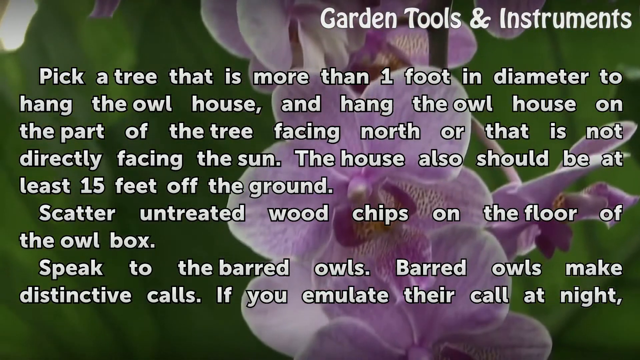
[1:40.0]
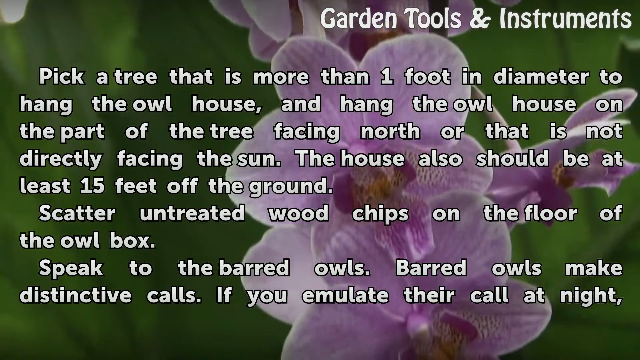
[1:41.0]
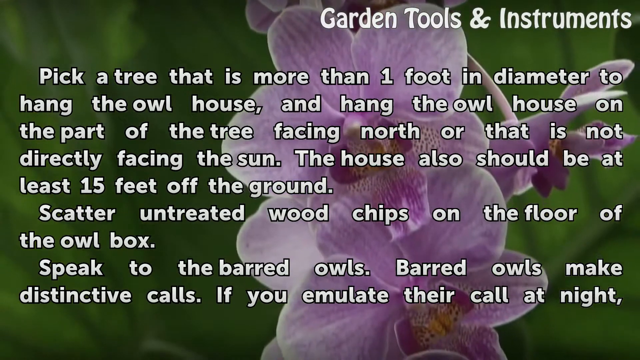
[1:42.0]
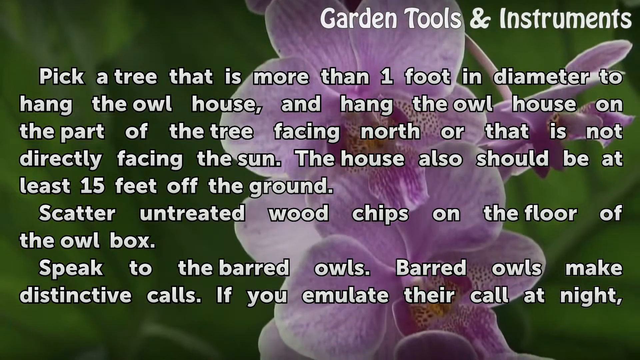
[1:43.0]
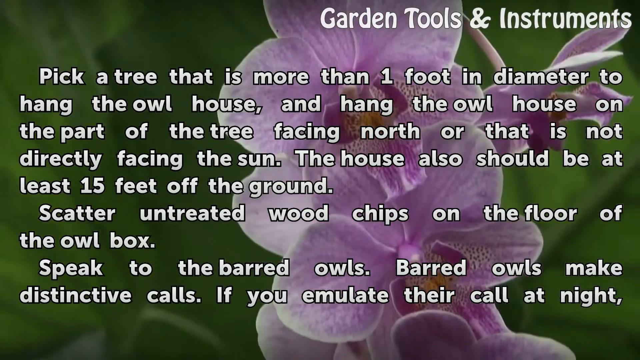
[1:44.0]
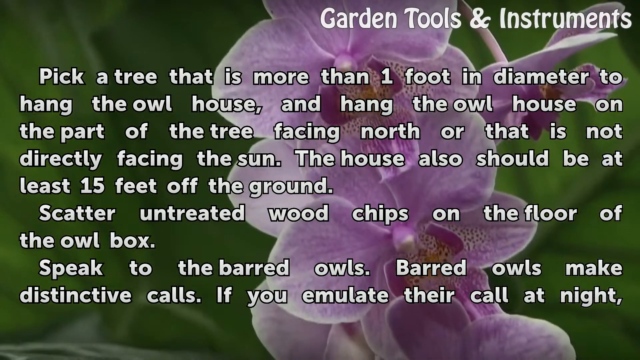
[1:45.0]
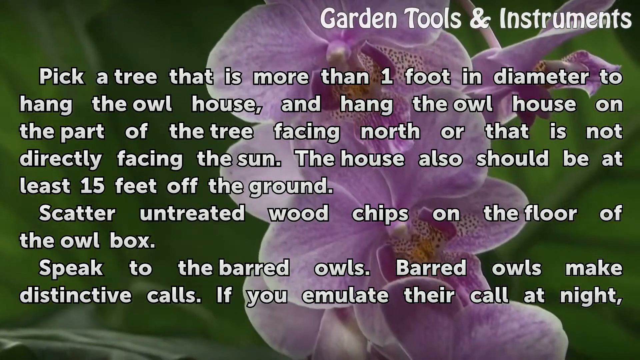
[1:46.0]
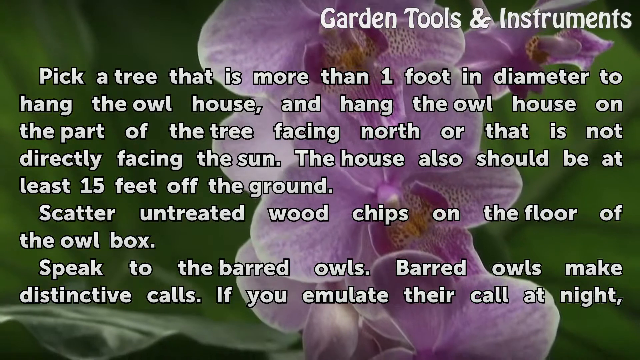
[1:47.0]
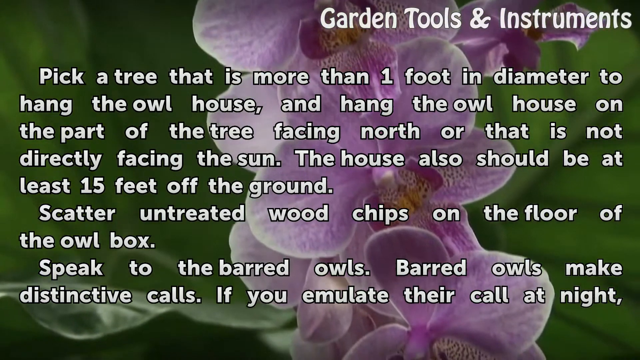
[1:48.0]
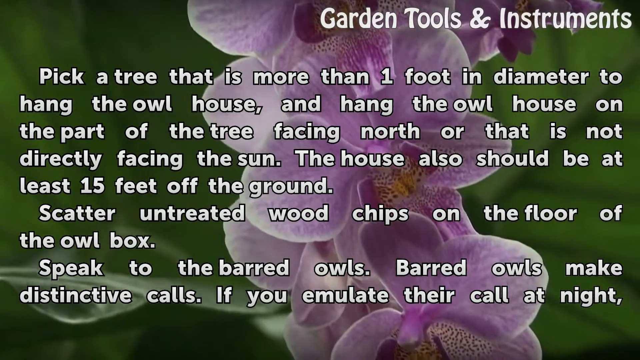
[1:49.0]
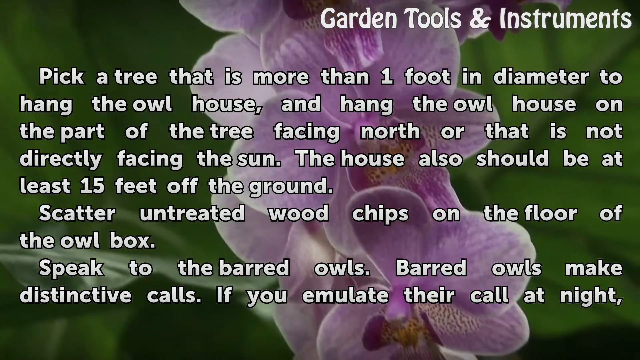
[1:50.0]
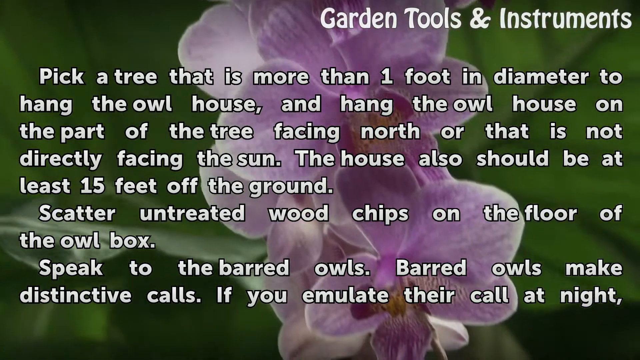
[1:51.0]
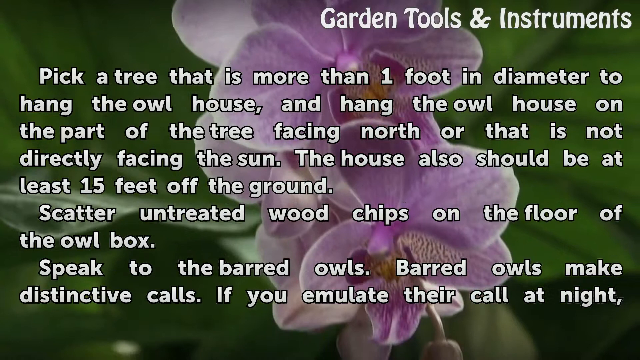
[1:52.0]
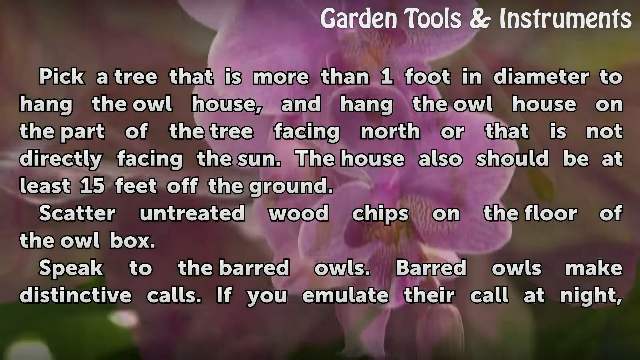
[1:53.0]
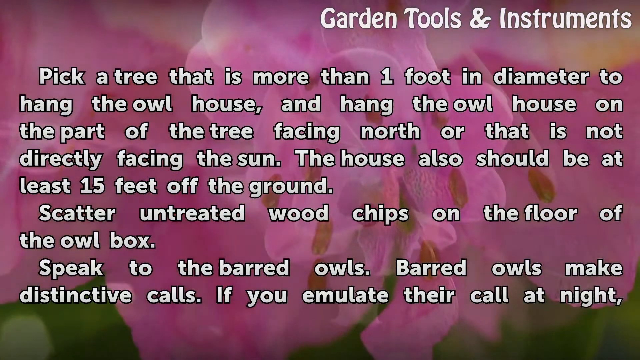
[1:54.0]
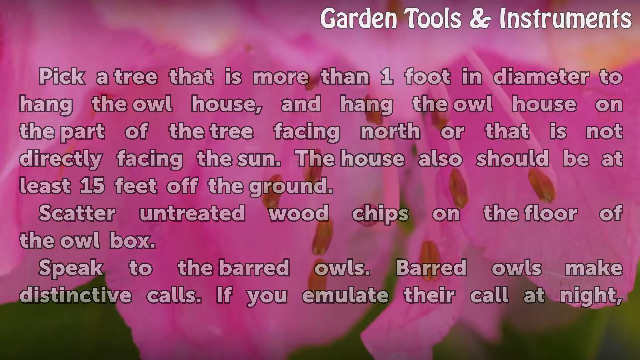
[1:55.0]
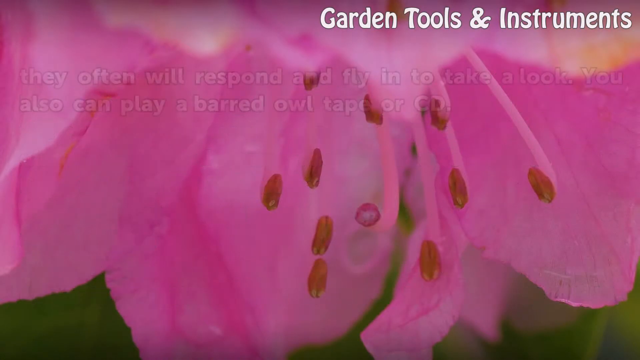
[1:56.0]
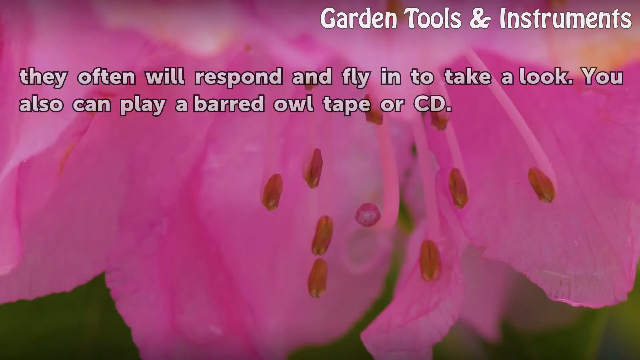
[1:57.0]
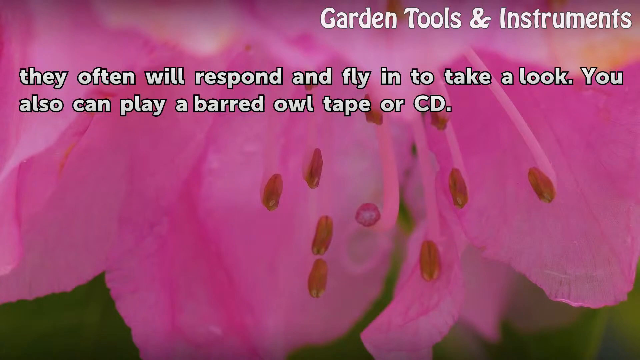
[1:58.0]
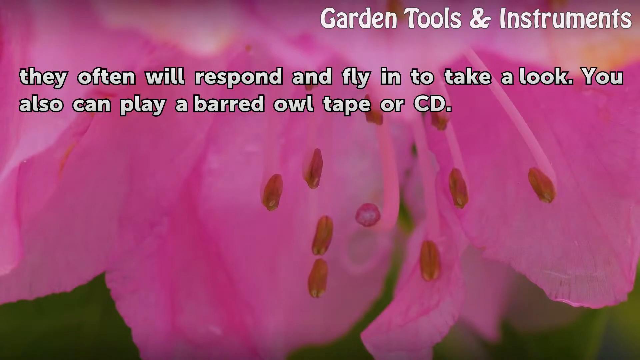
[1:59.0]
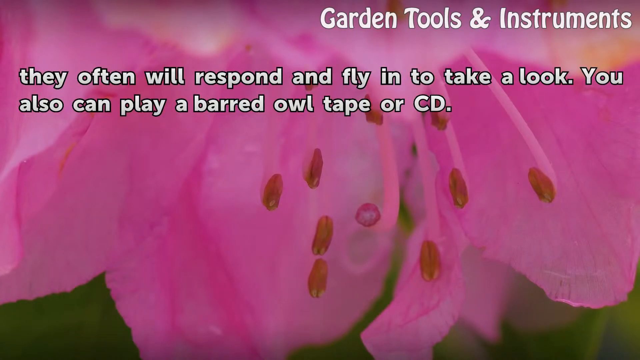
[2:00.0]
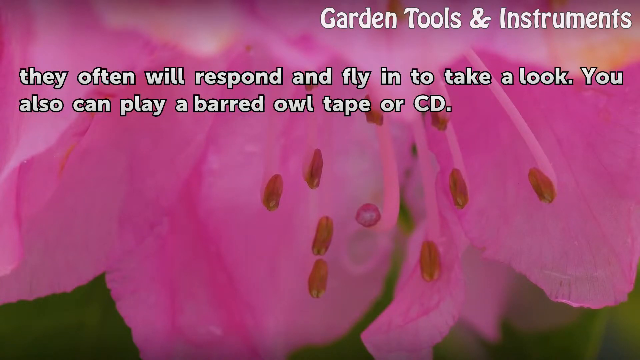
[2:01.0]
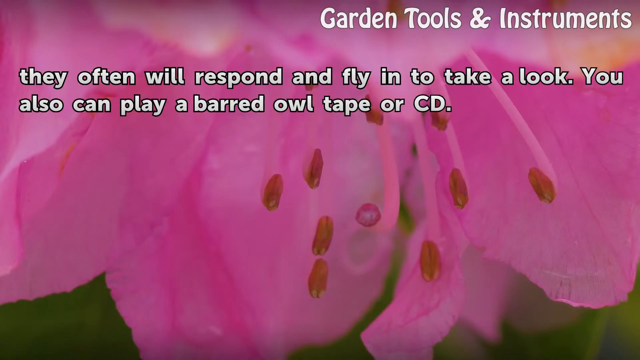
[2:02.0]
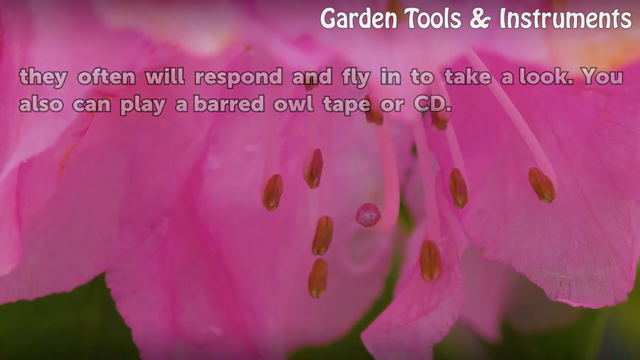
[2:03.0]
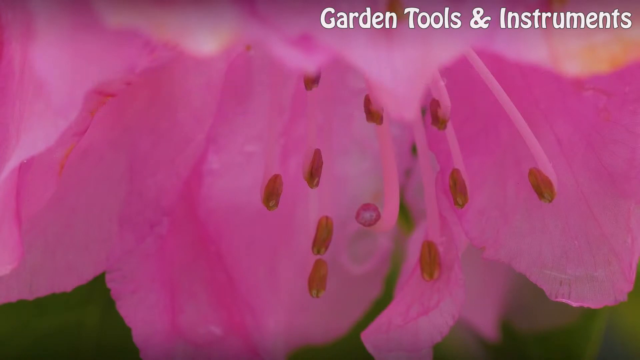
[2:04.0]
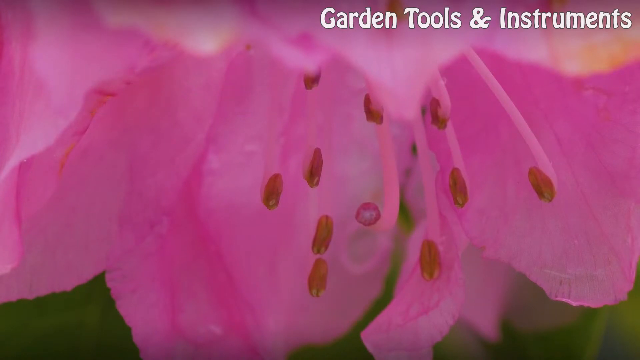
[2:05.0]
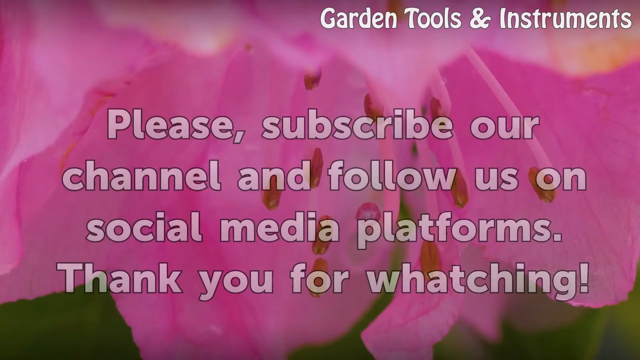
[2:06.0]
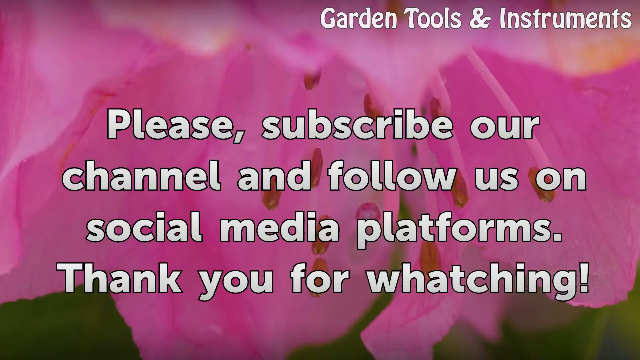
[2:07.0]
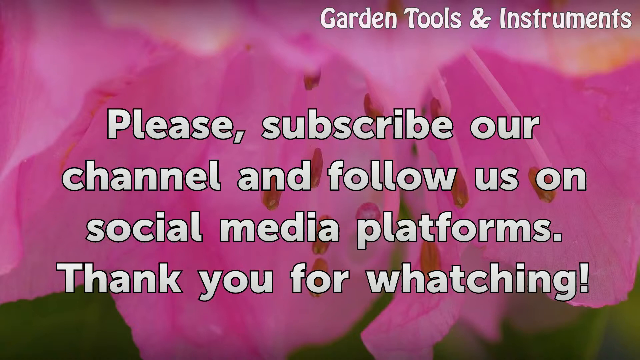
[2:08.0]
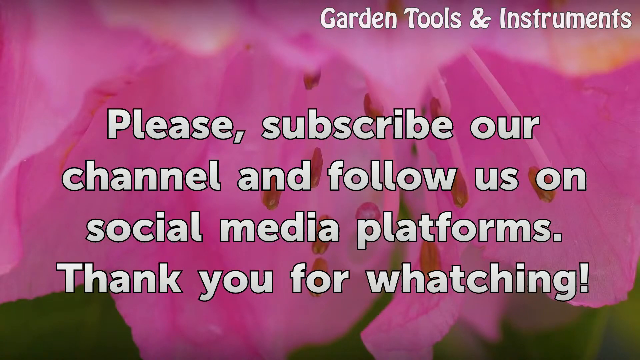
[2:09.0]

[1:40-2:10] The background video shows small light lavender colored flowers with round petals, a few of them on one branch, as the camera pans down somewhat, showing a bunch of these flowers. White text covering nearly the whole screen reads: "Pick a tree that is more than one foot in diameter to hang the owl house and hang the owl house on the part of the tree facing north or that is not directly facing the sun. The house also should be at least 15 feet off the ground. Scatter untreated wood chips on the floor of the owl box. Speak to the barred owls. Barred owls make distinctive calls. If you emulate their call at night, they often will respond and fly in to take a look. You also can play a barred owl tape or CD." The background then changes to a very zoomed-in close-up of a bright pink flower with long stringy filaments that have light brown oval shapes at the ends, roughly seven or eight of them sticking up from the flower.